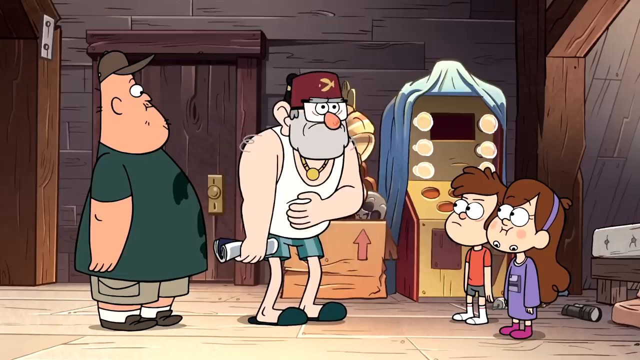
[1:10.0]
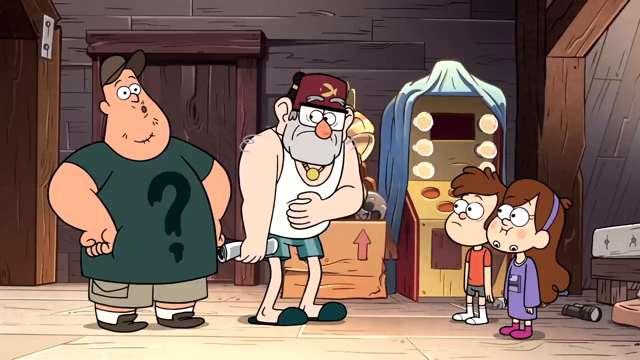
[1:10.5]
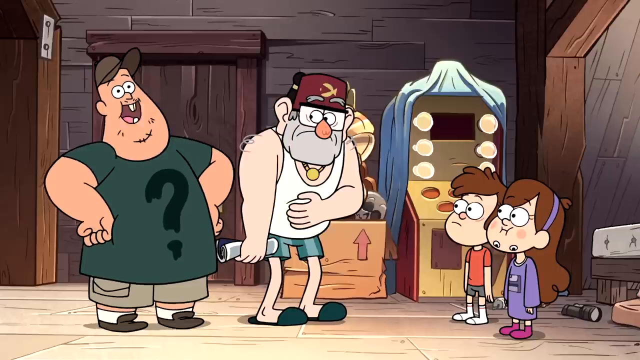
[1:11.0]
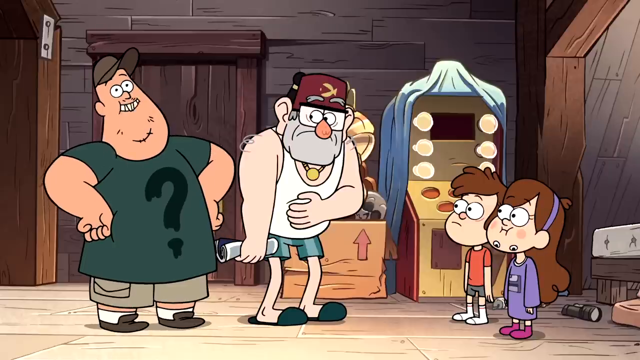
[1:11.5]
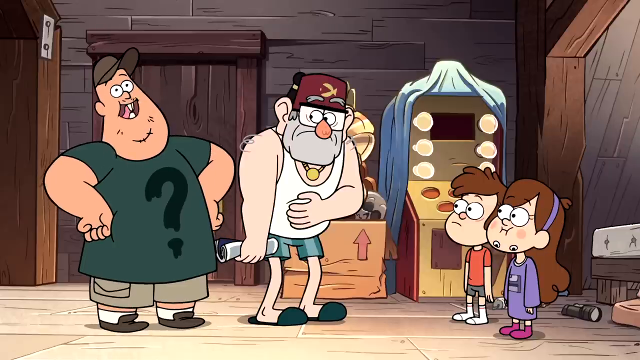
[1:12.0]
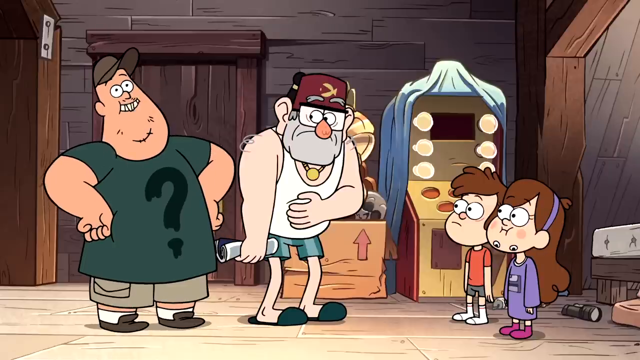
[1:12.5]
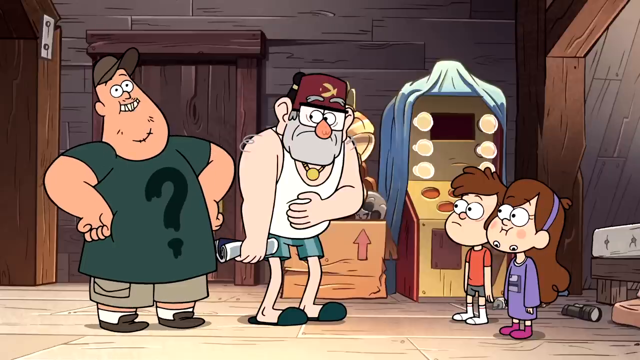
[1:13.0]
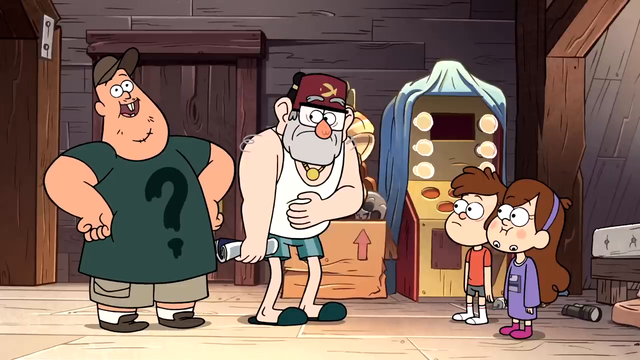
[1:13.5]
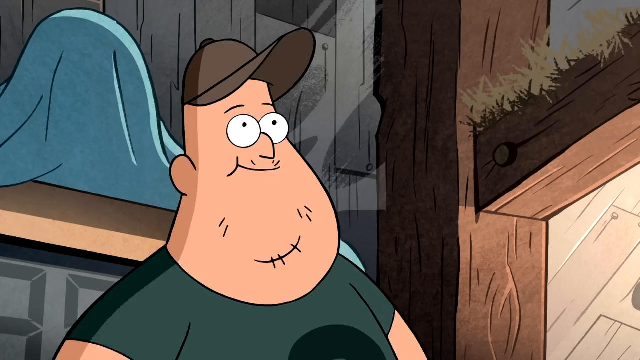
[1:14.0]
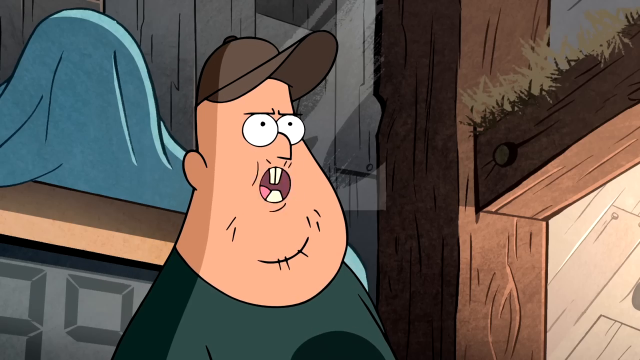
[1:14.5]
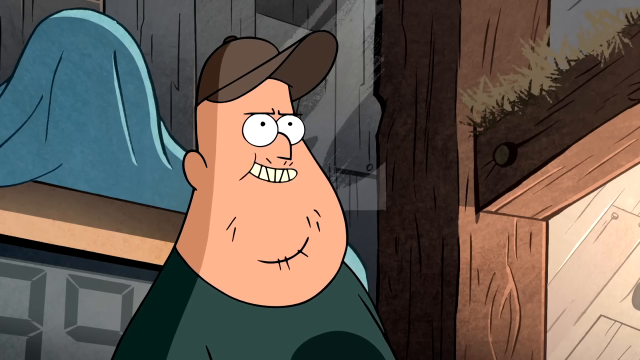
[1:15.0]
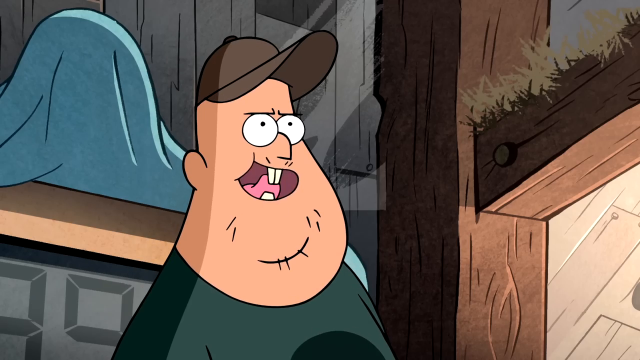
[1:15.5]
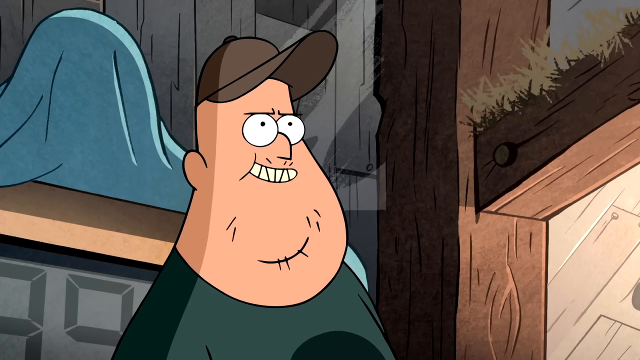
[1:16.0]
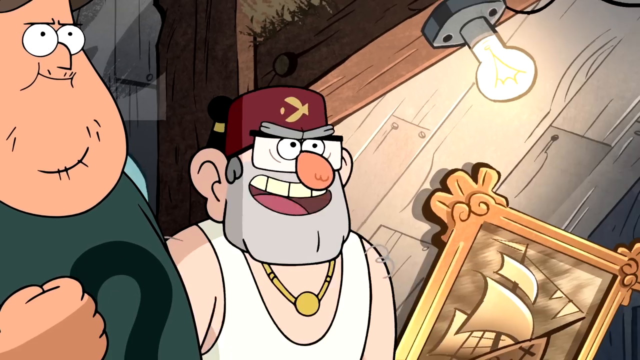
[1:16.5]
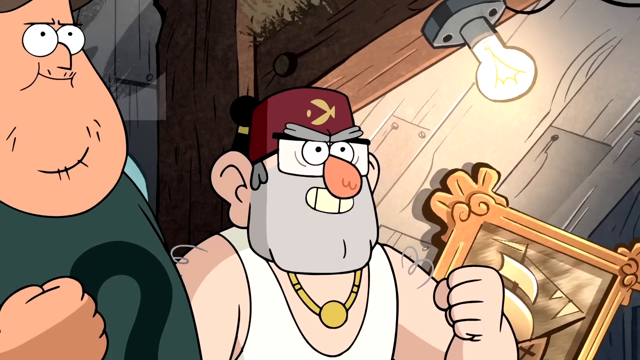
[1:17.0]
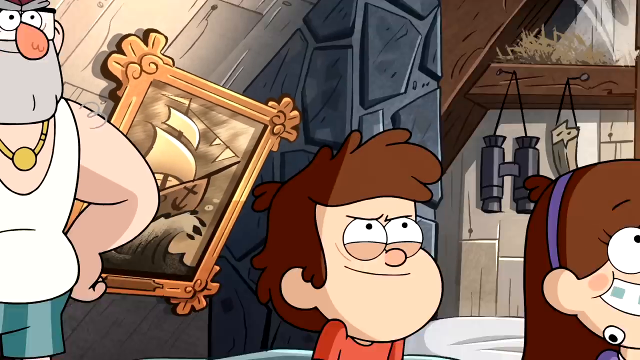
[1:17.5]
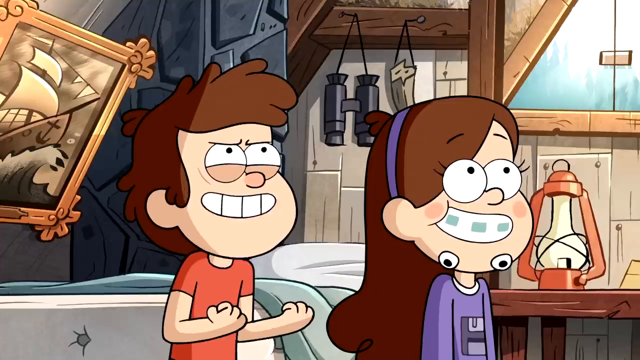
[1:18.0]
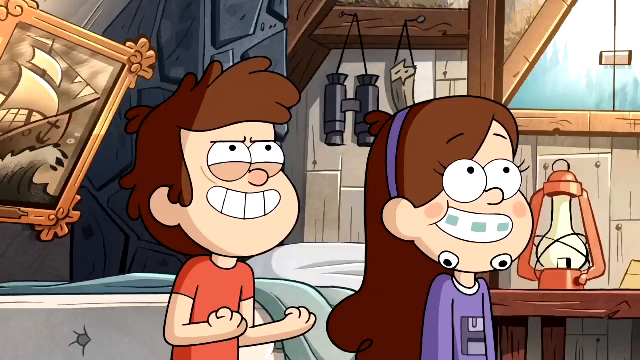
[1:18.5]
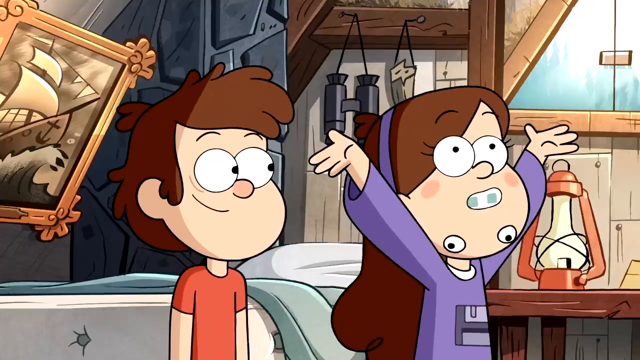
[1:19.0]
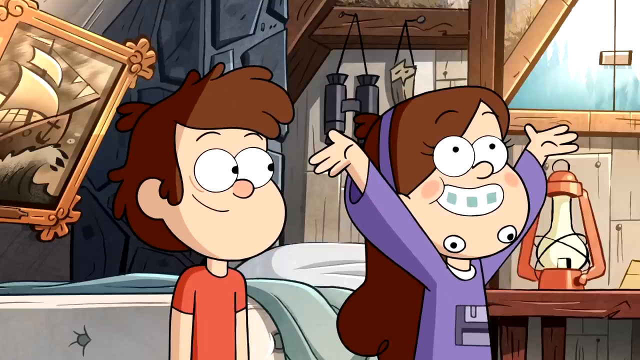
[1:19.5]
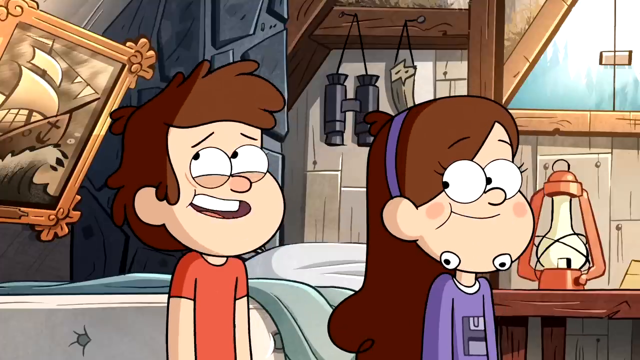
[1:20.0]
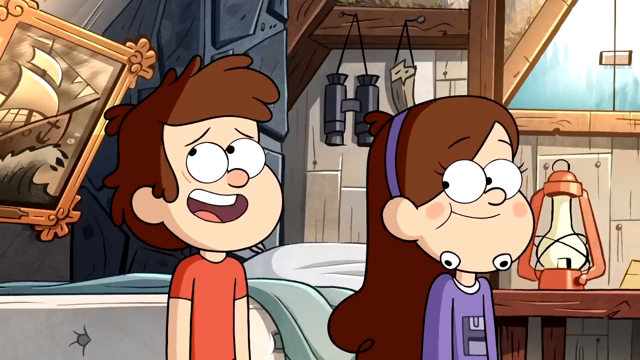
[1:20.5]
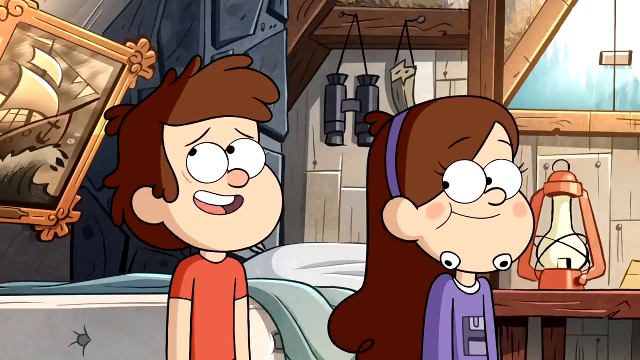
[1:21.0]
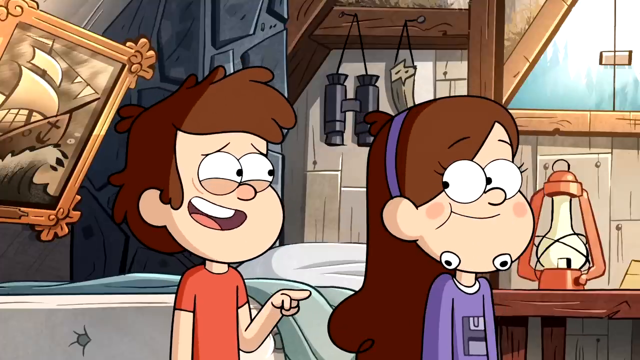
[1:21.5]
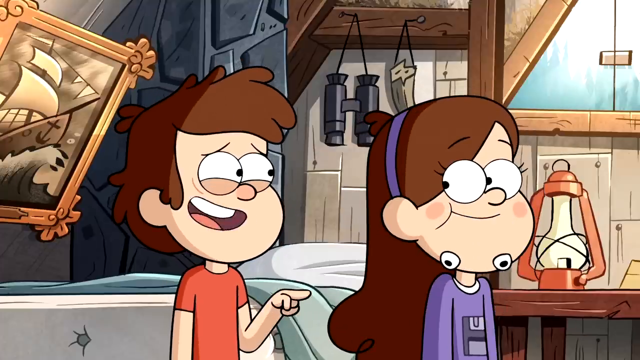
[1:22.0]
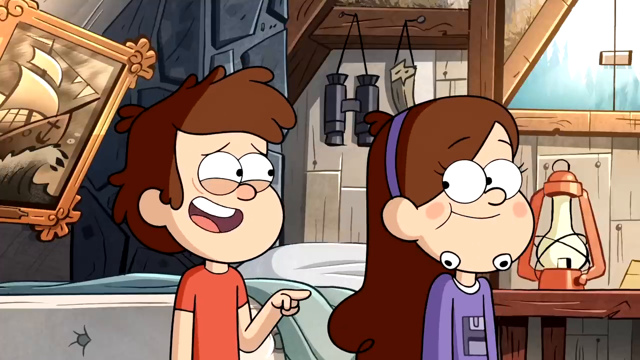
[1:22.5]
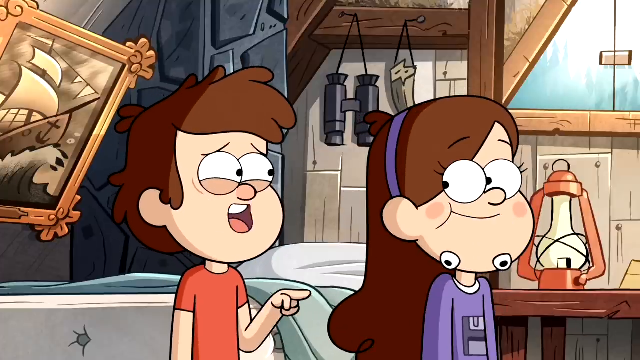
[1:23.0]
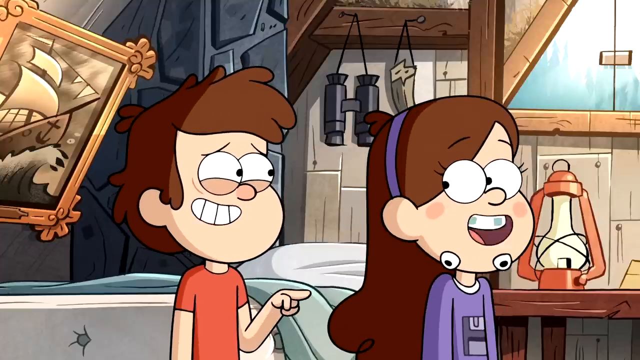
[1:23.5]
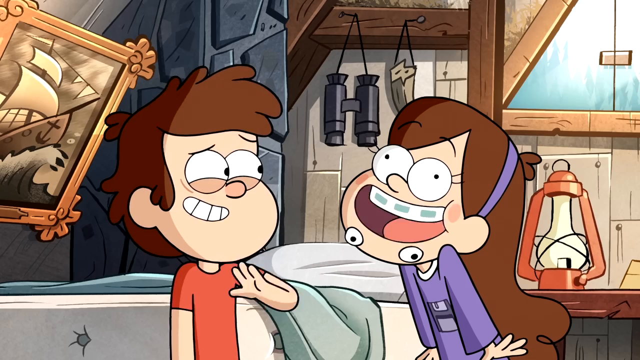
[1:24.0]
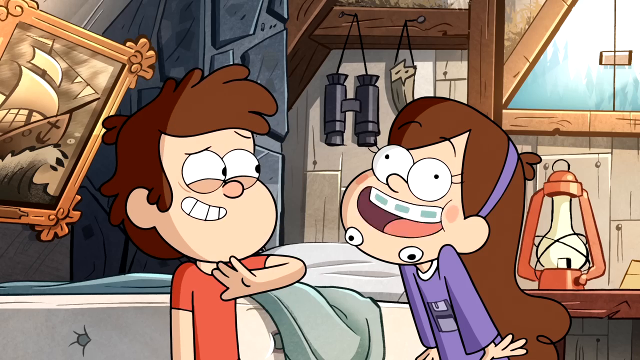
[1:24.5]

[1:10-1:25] The two men stand next to each other looking at the two children. The older man in the white tank top has his hand on his stomach. The slightly chubbier man in the t-shirt with the question mark puts his fists on his hips while talking; he has buck teeth and looks upwards. The view zooms in on his face as he keeps talking, showing his facial hair. The man in the white t-shirt kind of walks up towards the other man with his hand slightly behind his back. The young boy with brown hair is shown kind of up close with his eyes squinted. The scene changes to the boy and the girl, both smiling; the boy looks like he has something up his sleeve, while the girl just looks happy. She puts her hands up in the air in excitement and looks back at the boy, who now looks slightly nervous, with a nervous smile, pointing at her as he keeps talking. She turns towards him with kind of a crazy smile, her eyes slightly crisscrossed.